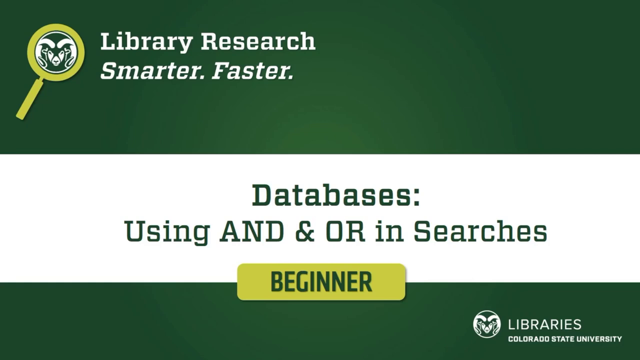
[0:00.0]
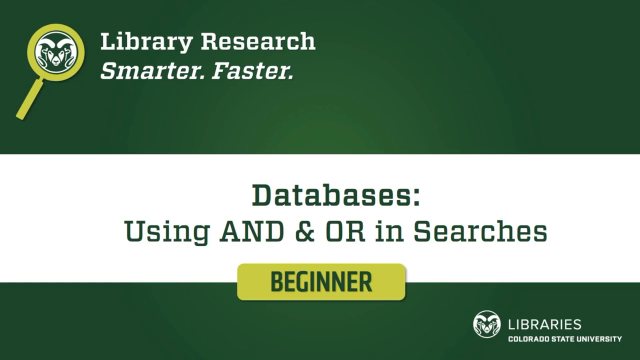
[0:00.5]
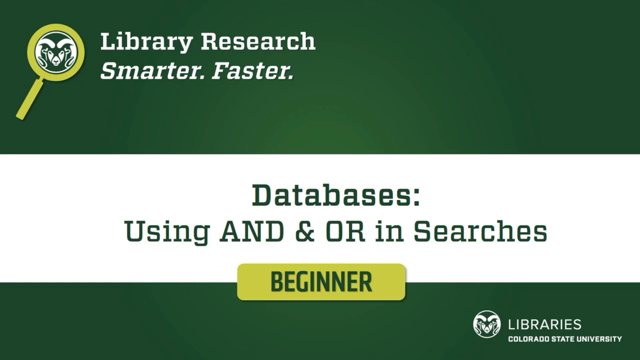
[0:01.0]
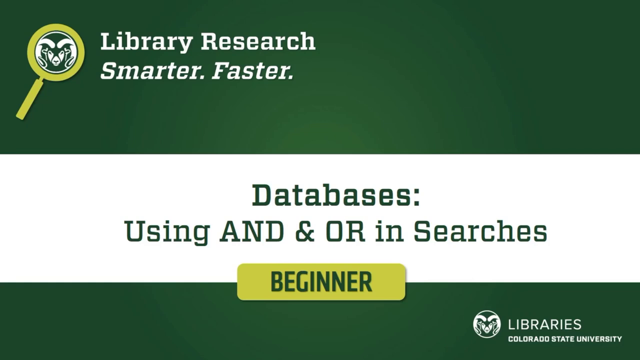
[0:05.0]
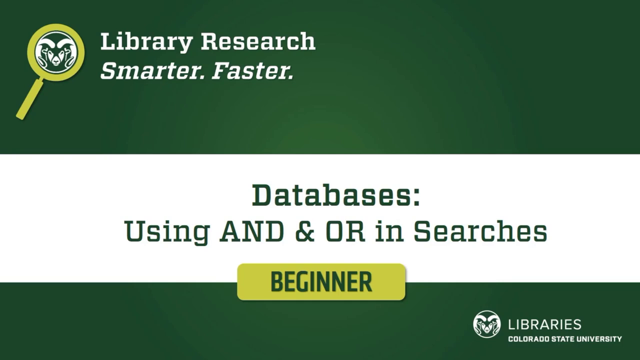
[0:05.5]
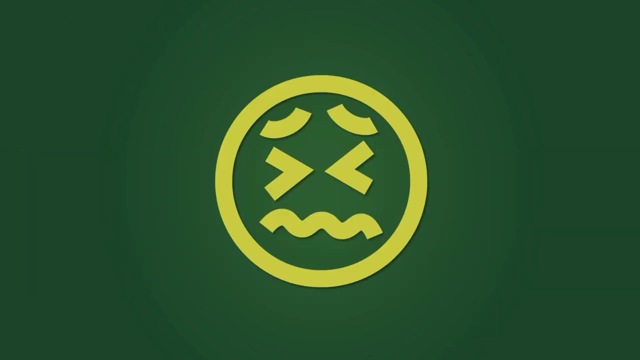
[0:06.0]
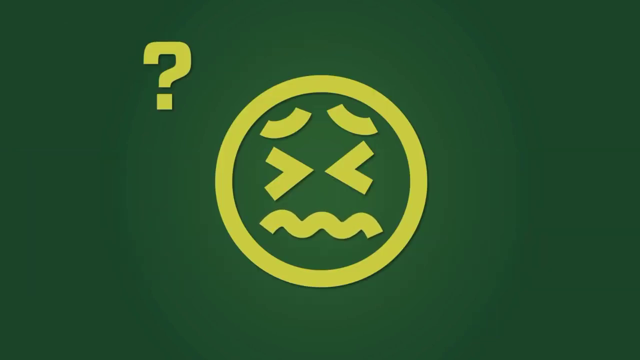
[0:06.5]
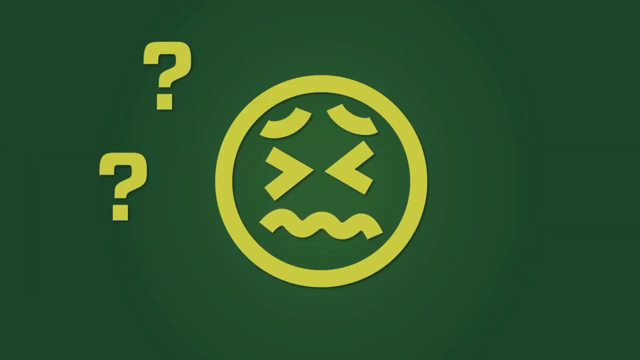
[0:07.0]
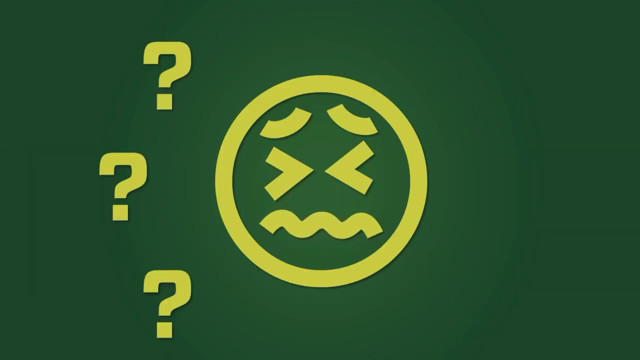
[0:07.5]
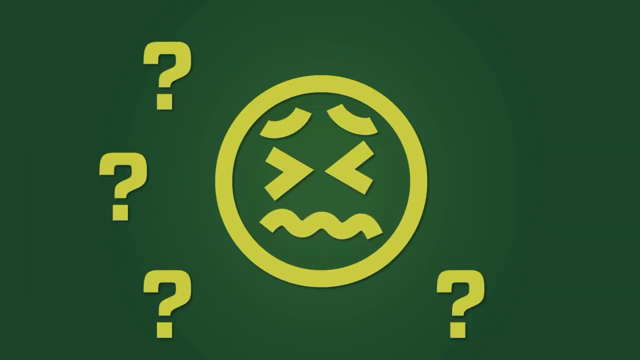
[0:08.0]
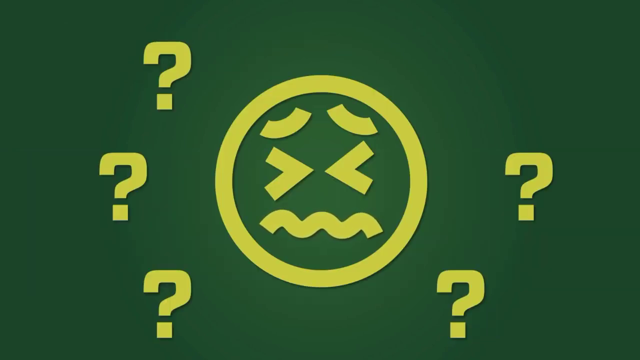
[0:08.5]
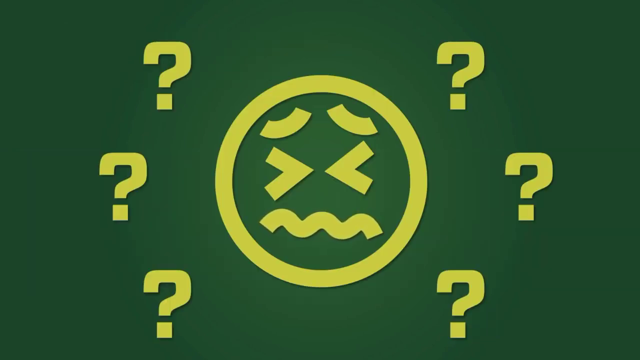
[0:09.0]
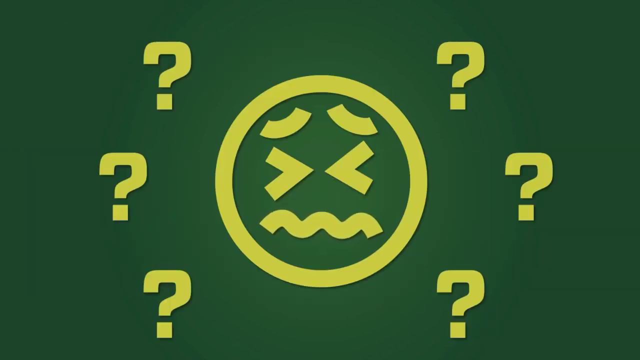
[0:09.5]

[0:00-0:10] The video opens on a landing screen. At the top is what looks like a magnifying glass with a white ram inside it, and beside it is the writing "Library research smarter. faster.", all within a green rectangle that runs across the screen. The center of the screen is white and shows, in all capital letters, "DATABASES:", with text below it about using "and", an and symbol, and "or in searches". In the center of the screen is a gold box with "BEGINNER" written inside in green capital letters. At the bottom, another plain green rectangle runs across the whole screen, with another picture of the ram in the circle and "libraries" in white beside it. The screen then changes to show a frowning round face with question marks all around it.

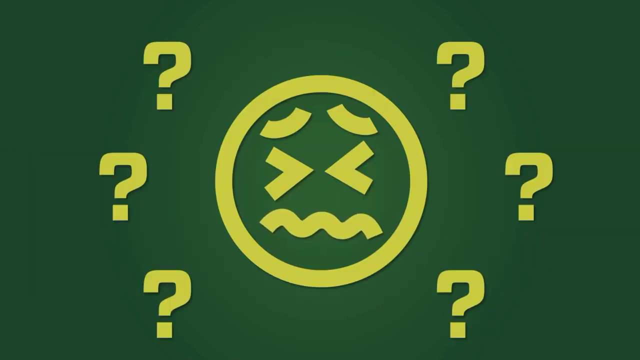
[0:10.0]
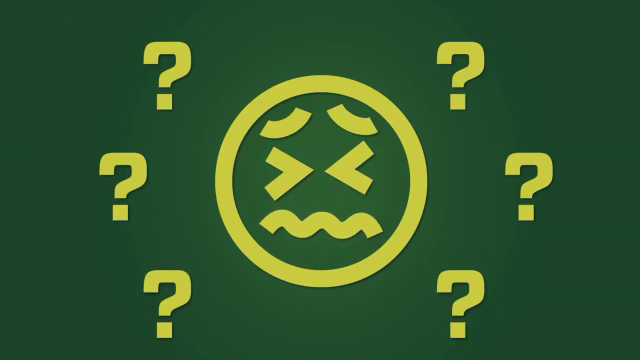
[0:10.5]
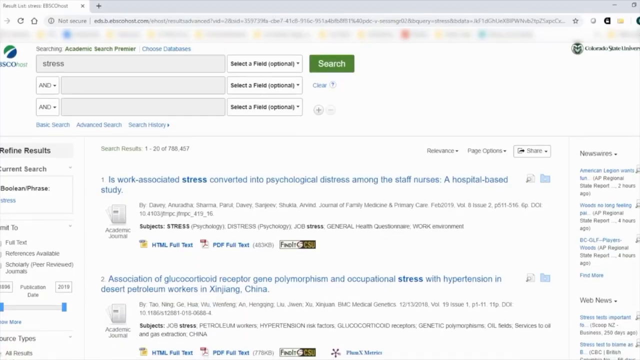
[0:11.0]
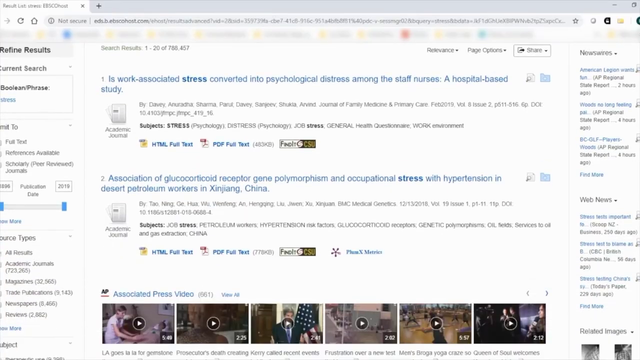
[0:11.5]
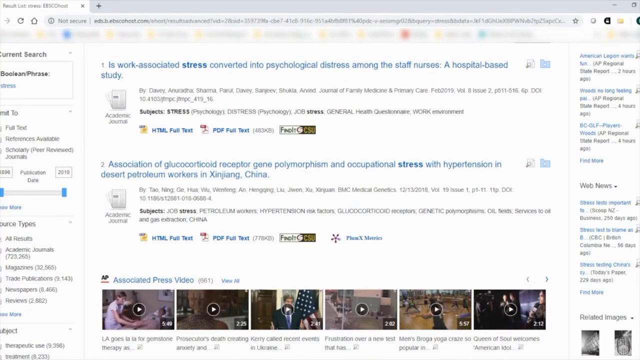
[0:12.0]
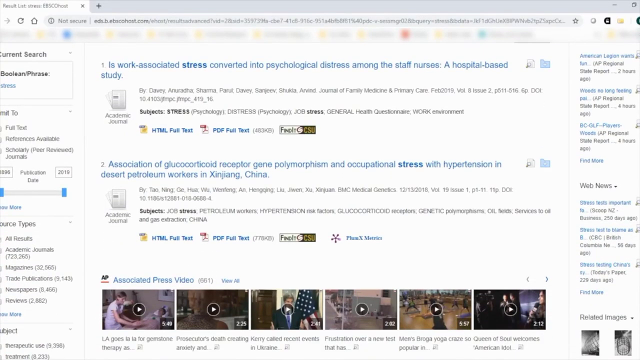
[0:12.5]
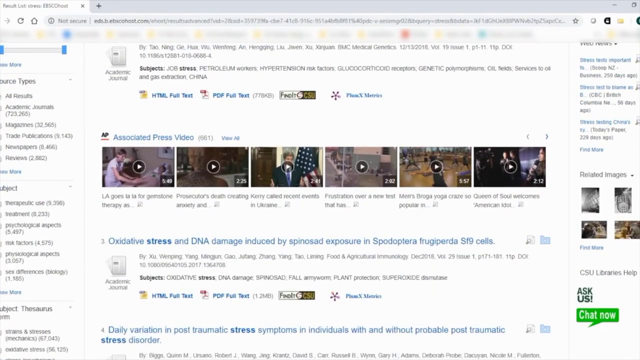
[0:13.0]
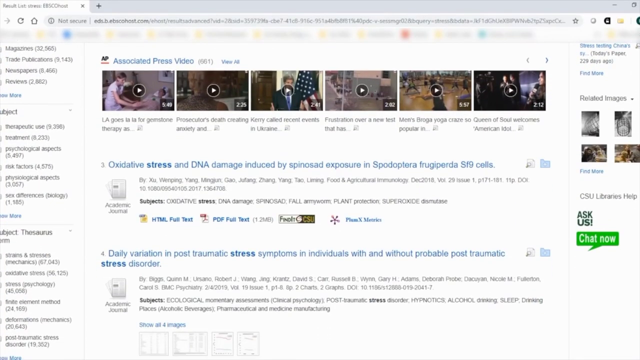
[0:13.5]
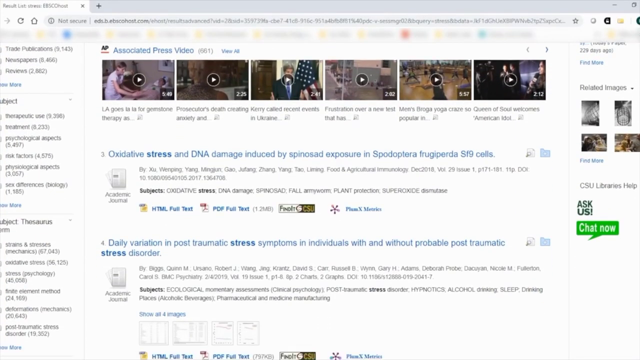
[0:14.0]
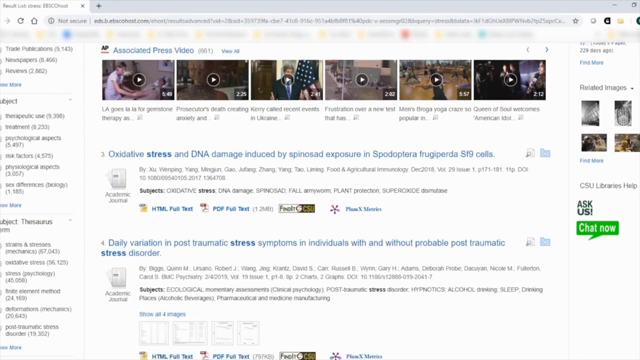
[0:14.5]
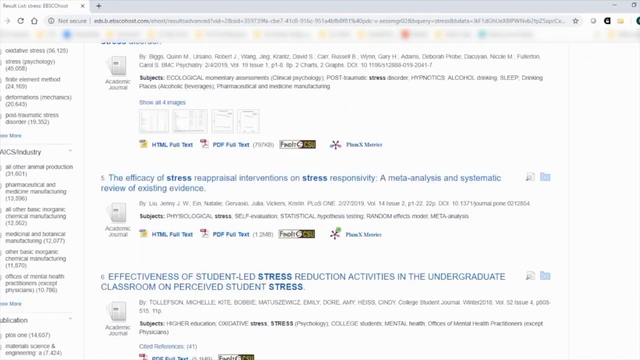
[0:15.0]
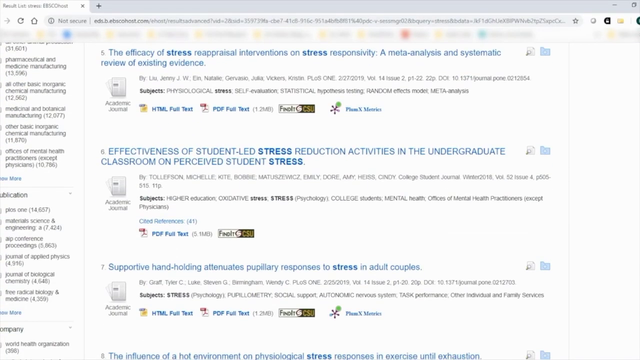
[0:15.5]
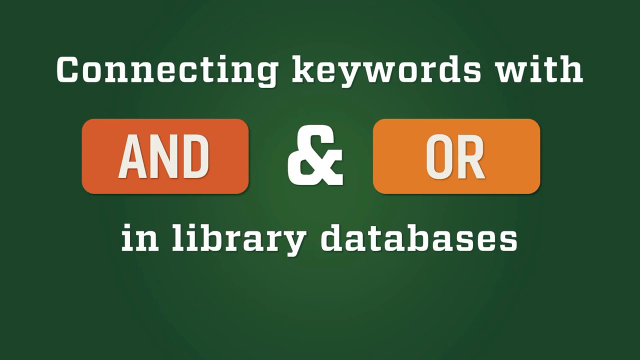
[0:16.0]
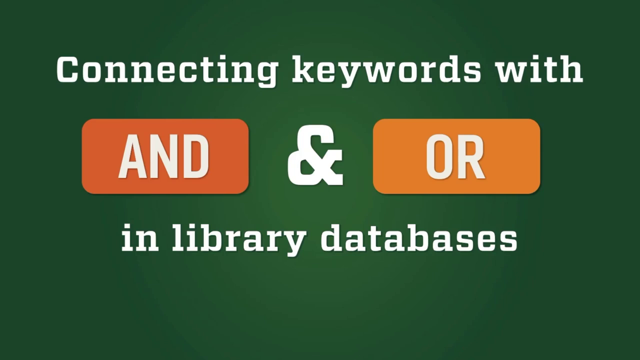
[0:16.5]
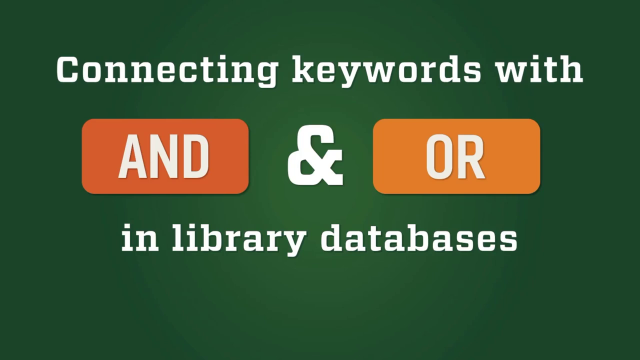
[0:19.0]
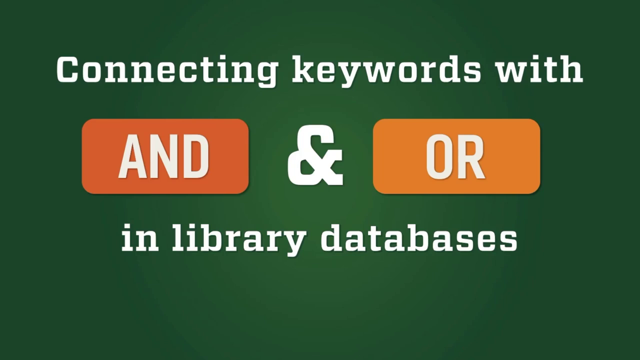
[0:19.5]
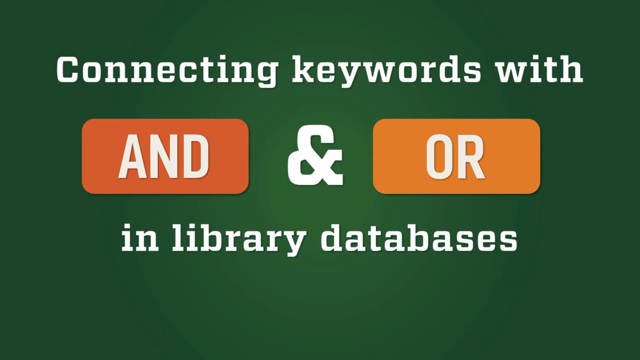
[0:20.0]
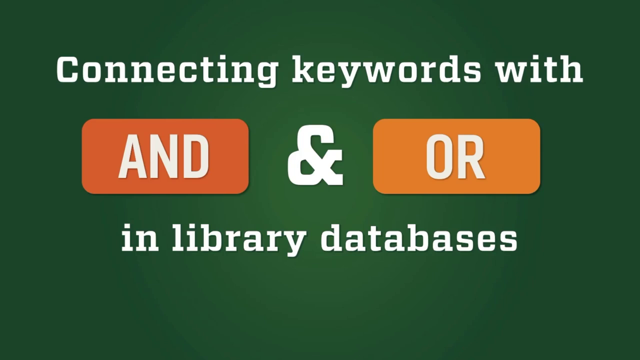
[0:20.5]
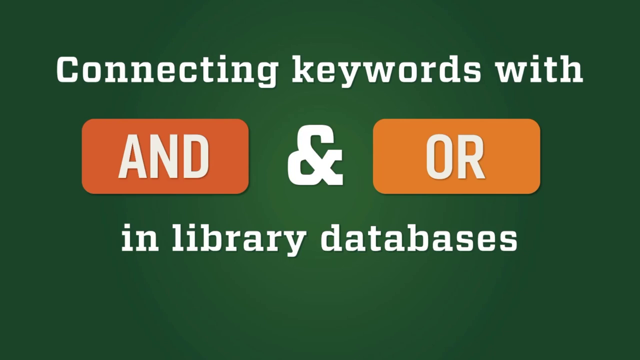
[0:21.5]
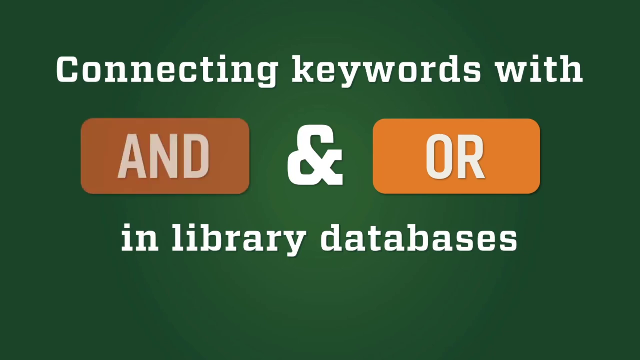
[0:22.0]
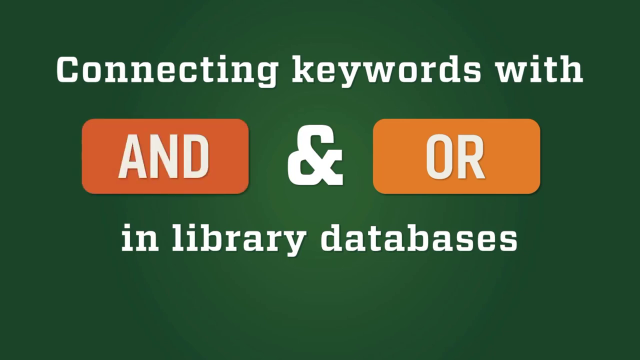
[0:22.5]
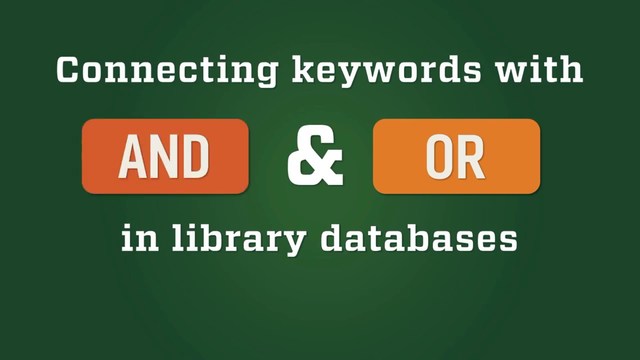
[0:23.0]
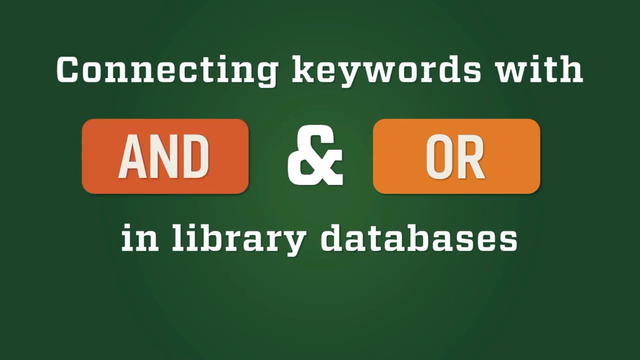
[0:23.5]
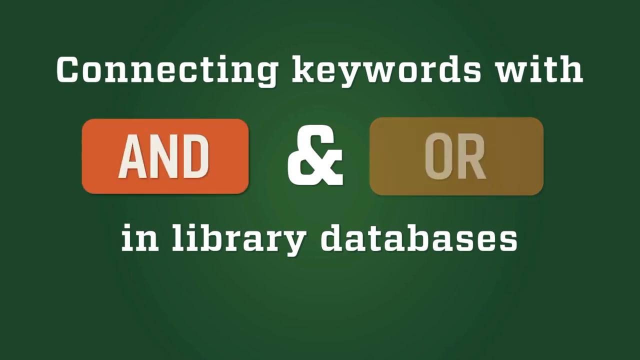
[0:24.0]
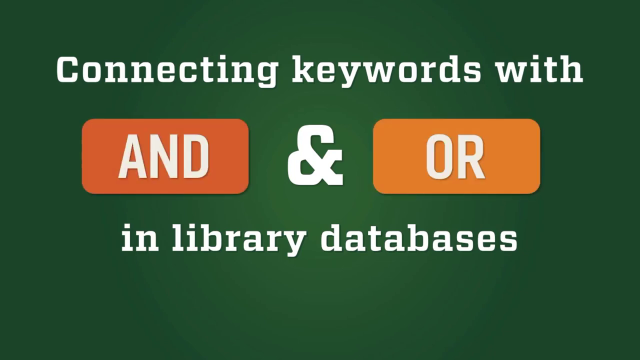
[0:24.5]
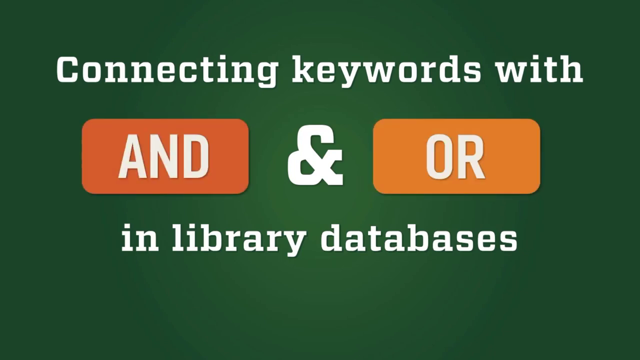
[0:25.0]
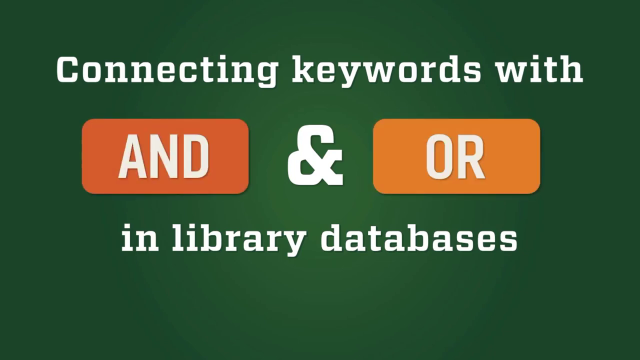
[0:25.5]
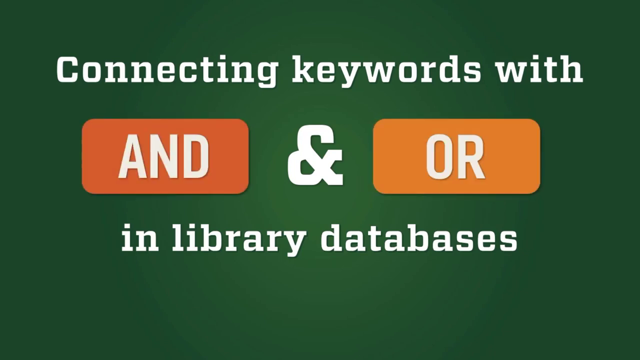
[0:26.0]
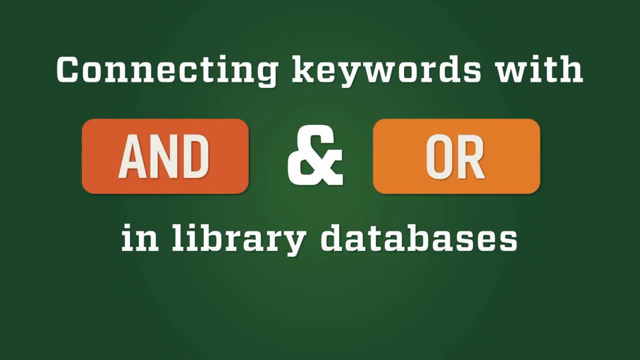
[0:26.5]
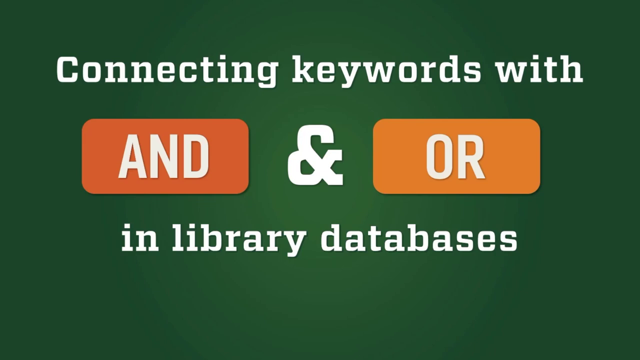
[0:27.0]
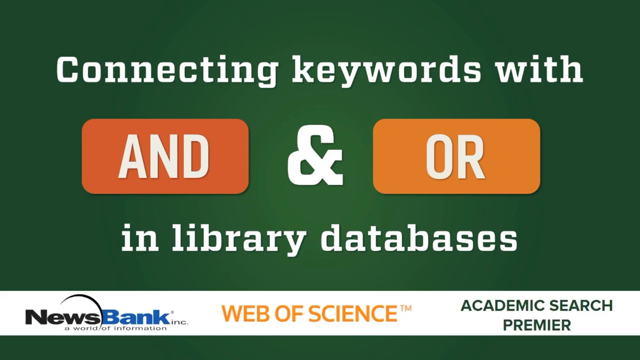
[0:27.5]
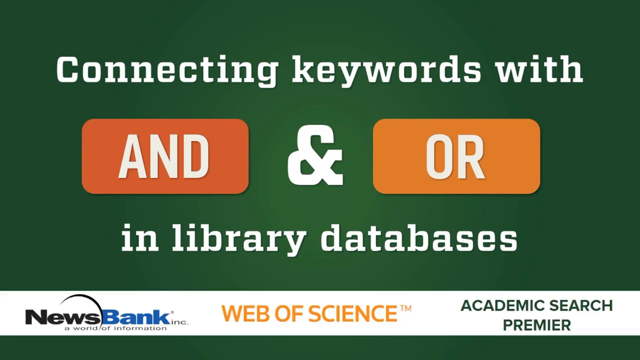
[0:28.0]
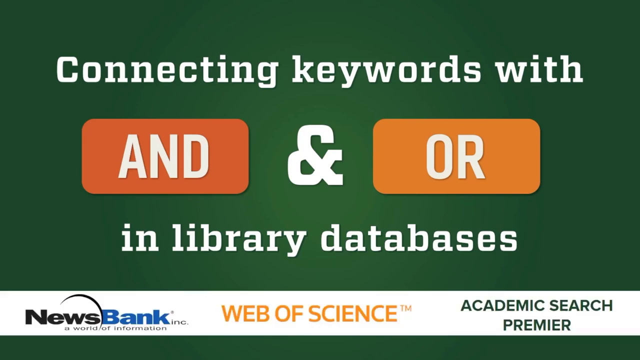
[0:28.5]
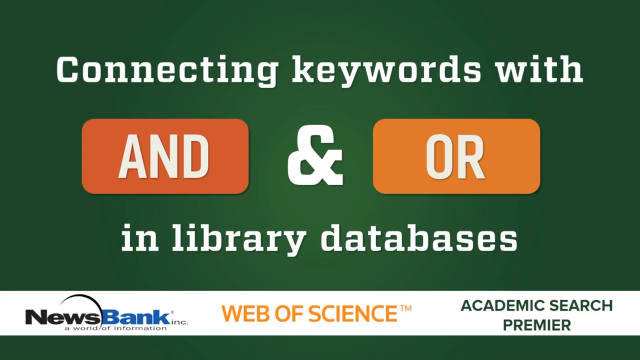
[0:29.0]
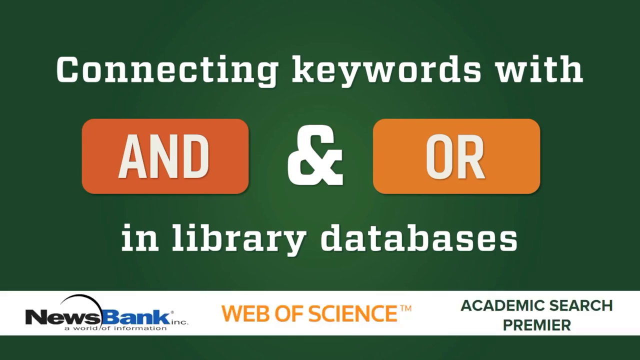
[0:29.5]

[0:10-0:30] A full screen, mostly green, shows a gold circle face with upside-down eyebrows, eyes that look almost angry or sad, and a mouth or mustache that looks angry and moves side to side. At least six question marks surround the face. The video moves to a screen with pictures, videos and a lot of writing. Then the words "connecting", "keywords" and "in library databases" appear, along with two big orange boxes; the "and" box is clicked first and the "or" box second. A white triangle then appears at the bottom, stretching across the whole screen, and a white box comes in with the title "NewsBank" and other words that seem like reference material.